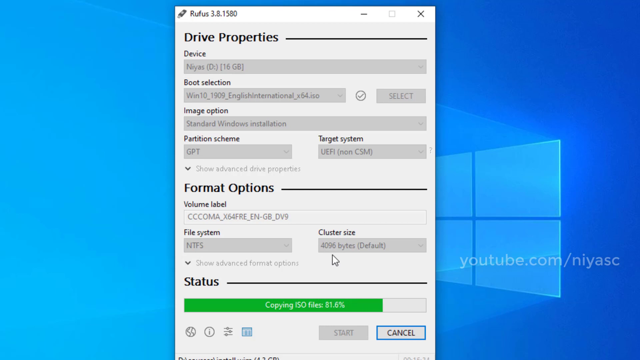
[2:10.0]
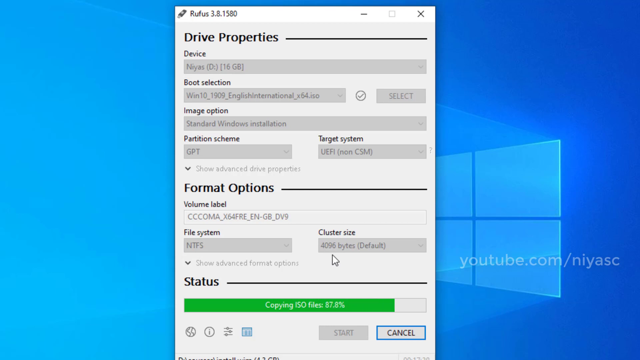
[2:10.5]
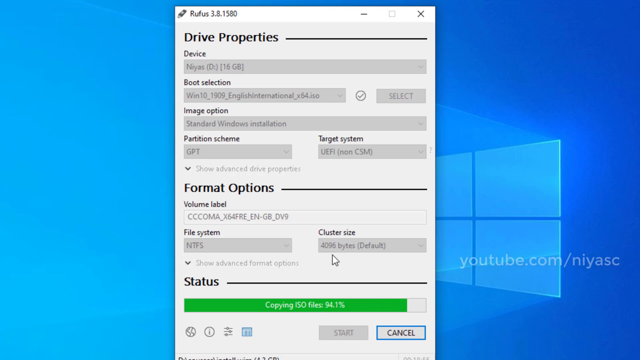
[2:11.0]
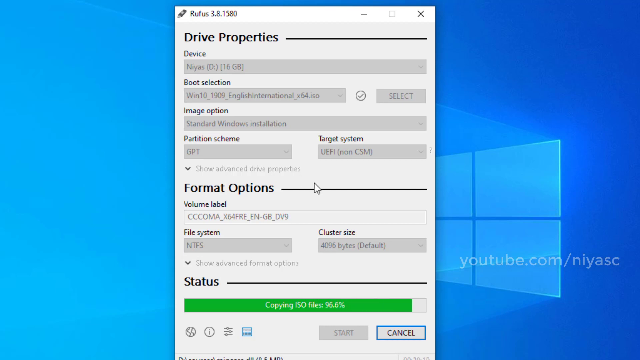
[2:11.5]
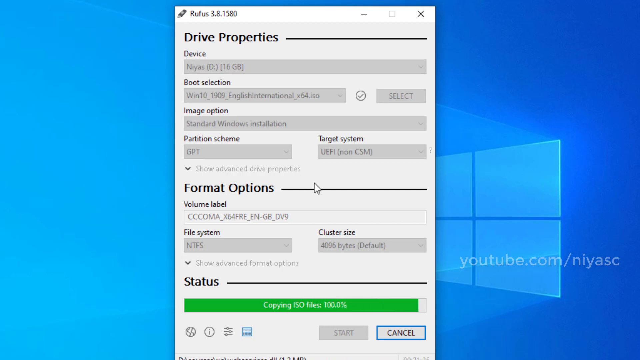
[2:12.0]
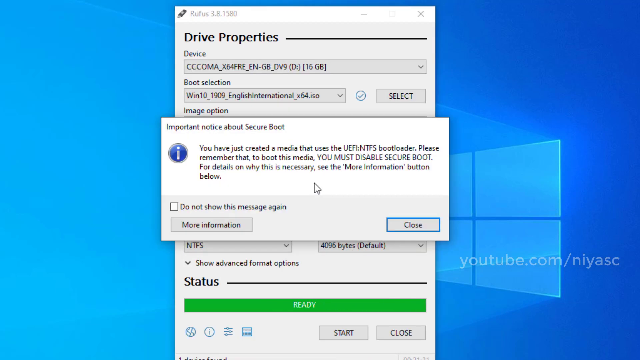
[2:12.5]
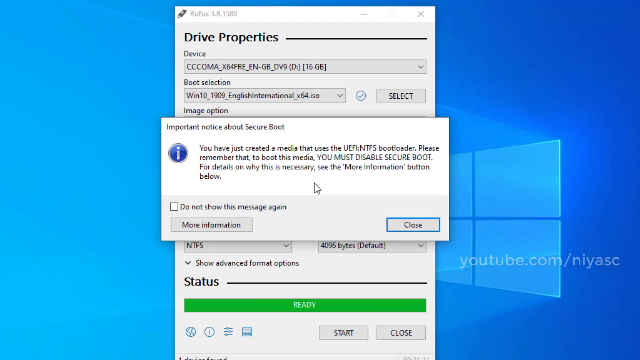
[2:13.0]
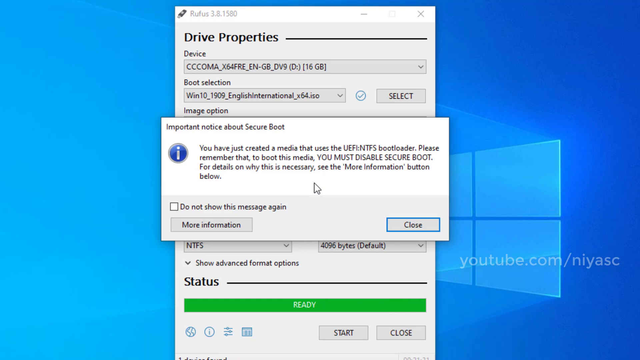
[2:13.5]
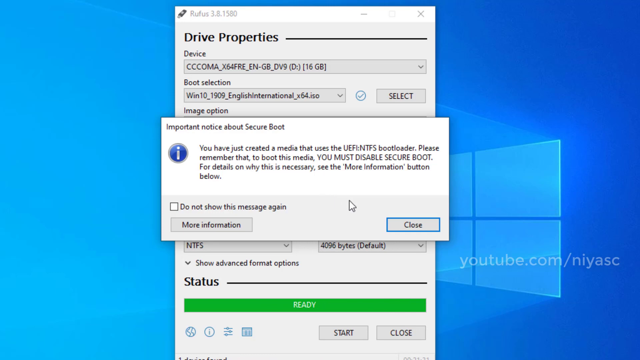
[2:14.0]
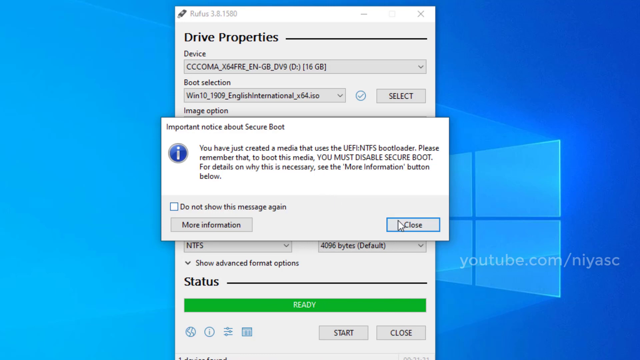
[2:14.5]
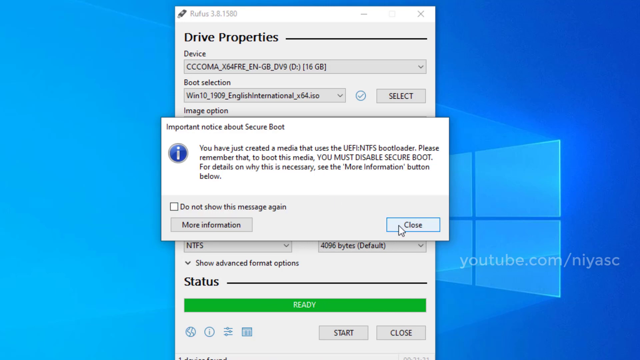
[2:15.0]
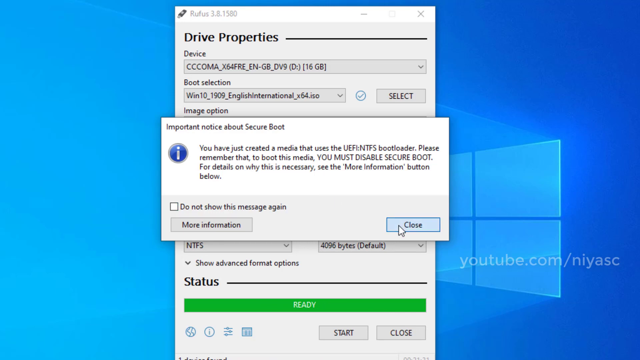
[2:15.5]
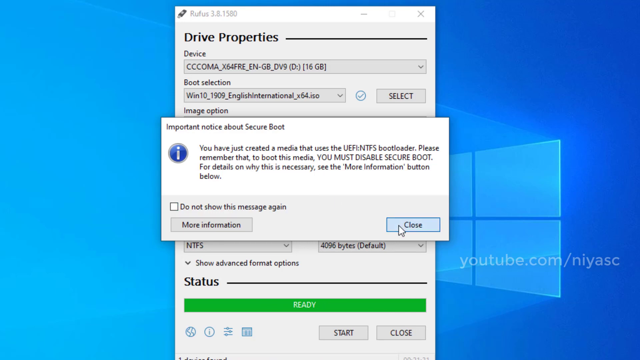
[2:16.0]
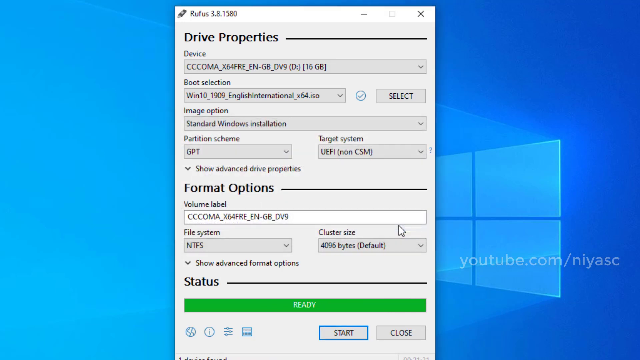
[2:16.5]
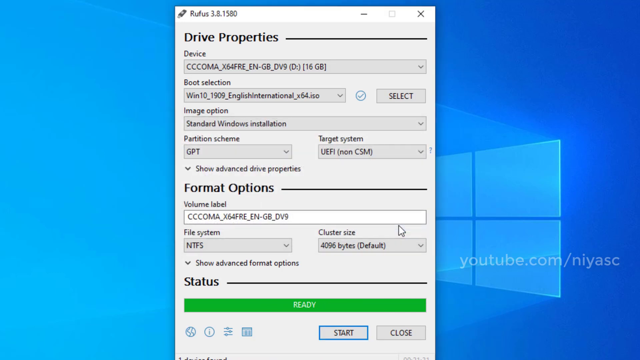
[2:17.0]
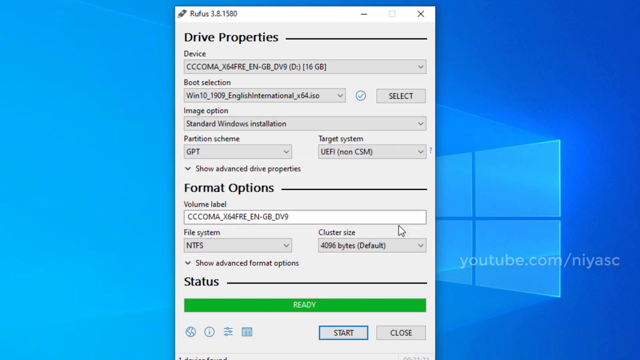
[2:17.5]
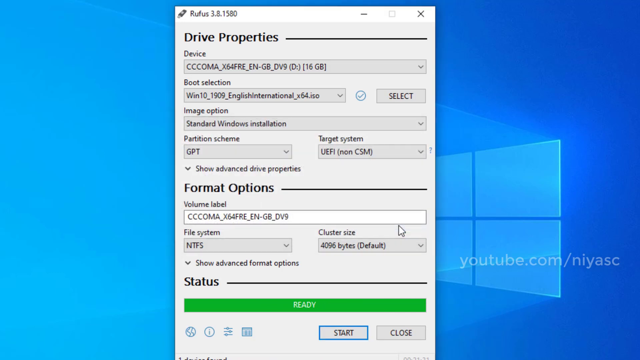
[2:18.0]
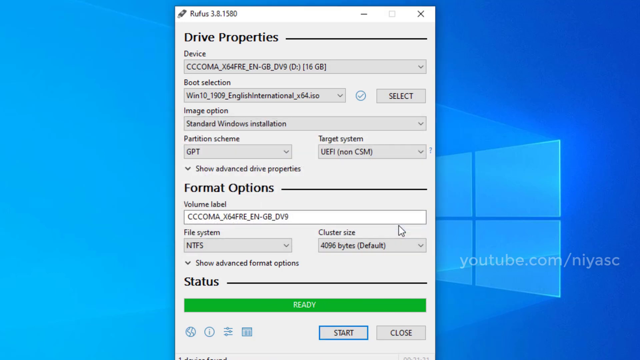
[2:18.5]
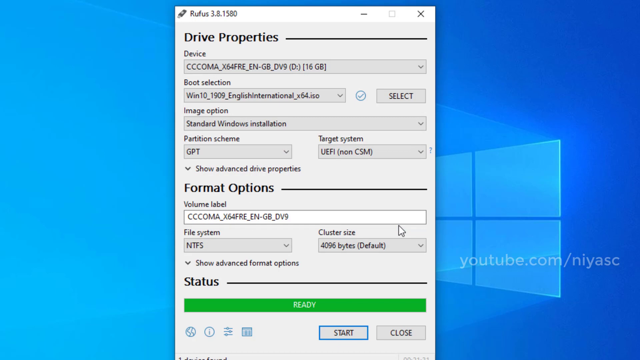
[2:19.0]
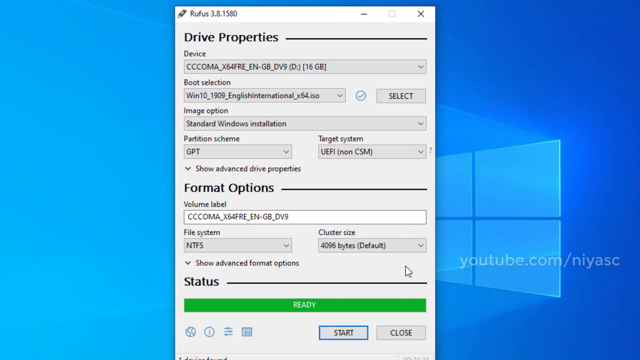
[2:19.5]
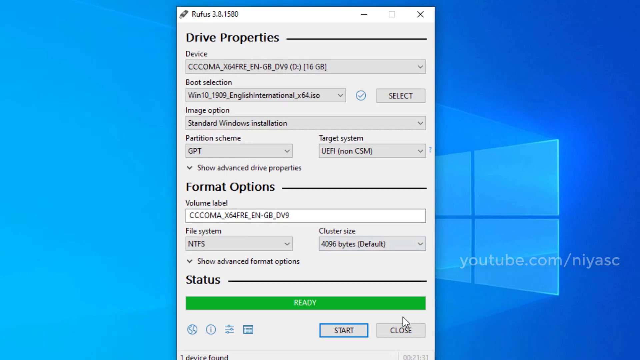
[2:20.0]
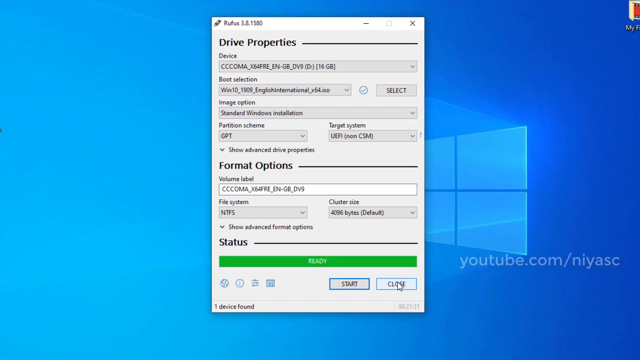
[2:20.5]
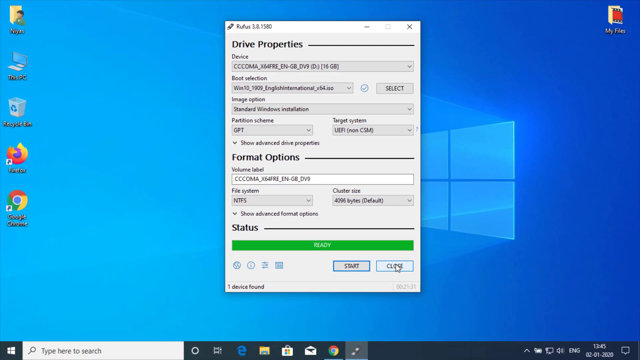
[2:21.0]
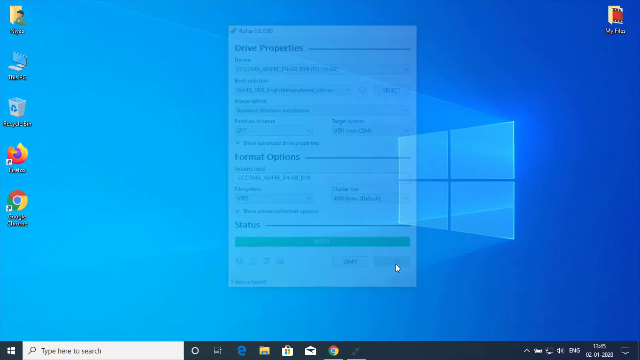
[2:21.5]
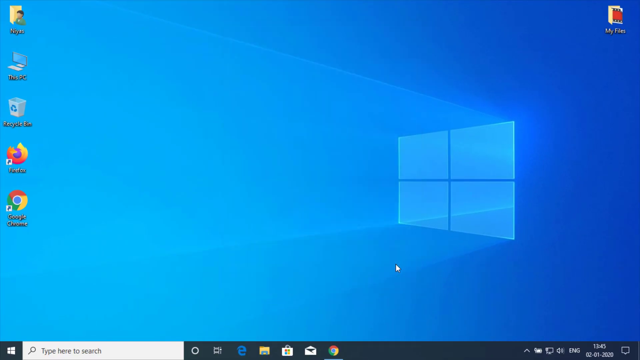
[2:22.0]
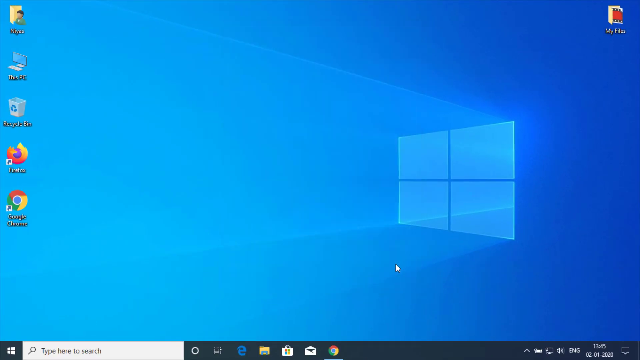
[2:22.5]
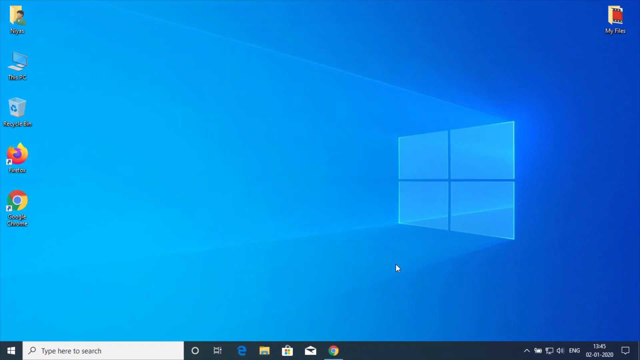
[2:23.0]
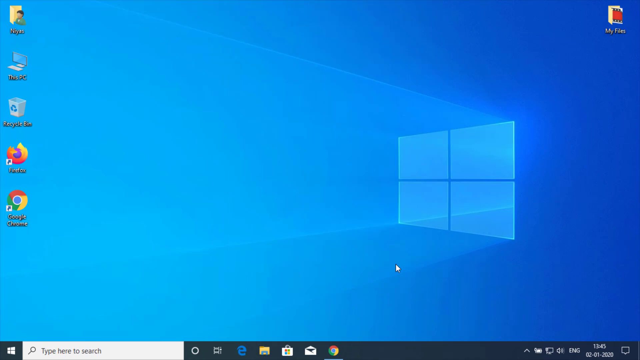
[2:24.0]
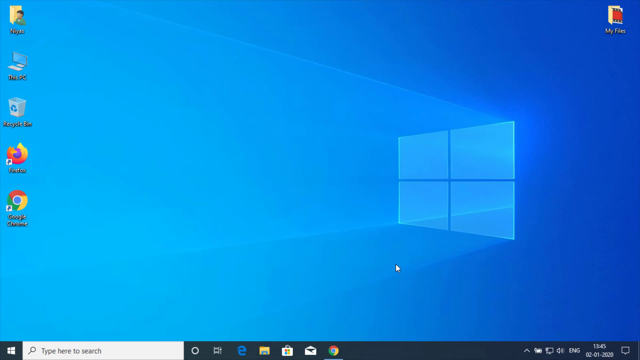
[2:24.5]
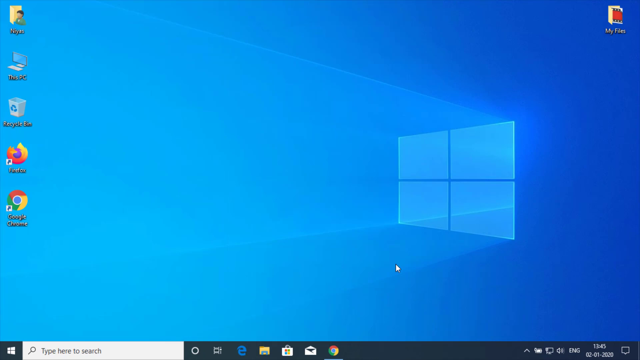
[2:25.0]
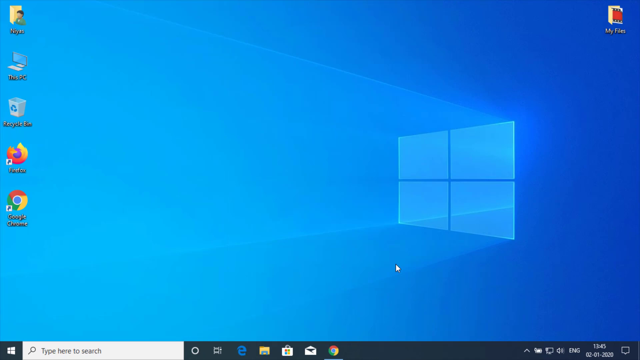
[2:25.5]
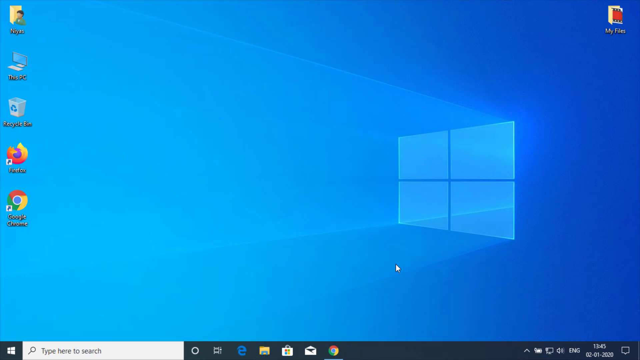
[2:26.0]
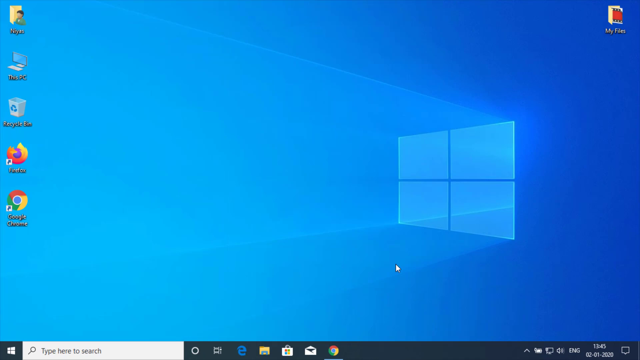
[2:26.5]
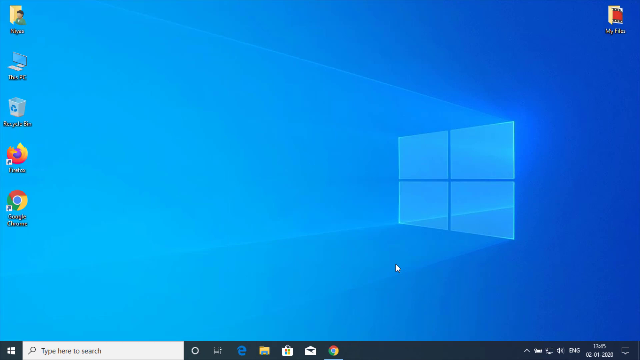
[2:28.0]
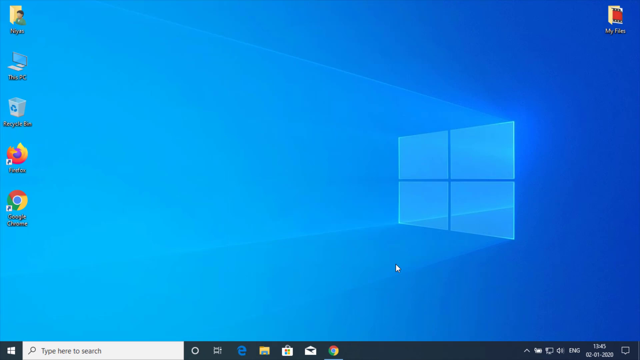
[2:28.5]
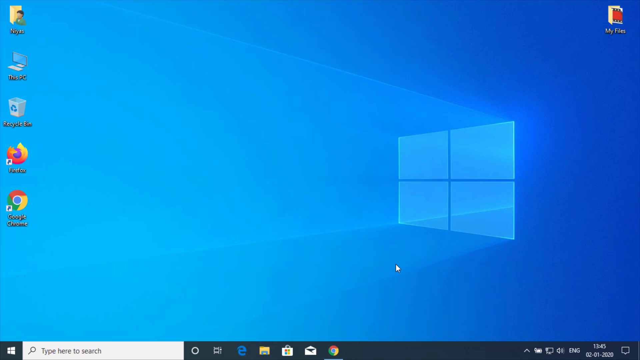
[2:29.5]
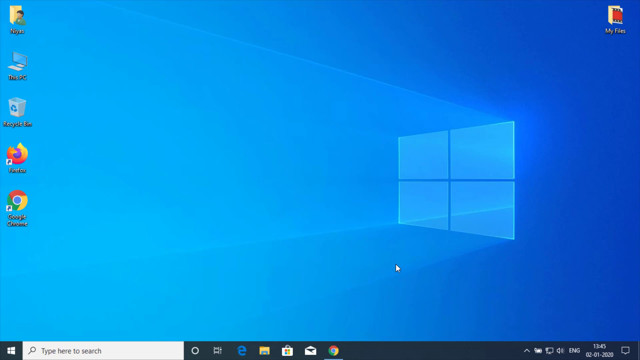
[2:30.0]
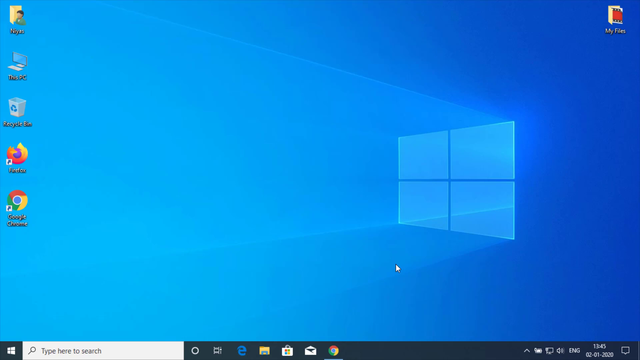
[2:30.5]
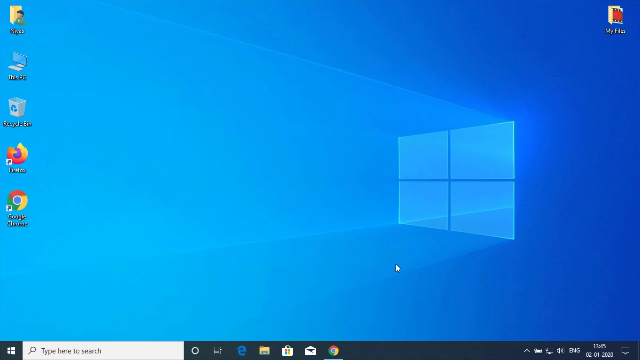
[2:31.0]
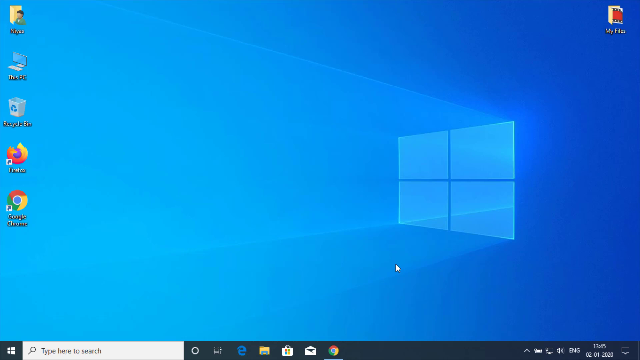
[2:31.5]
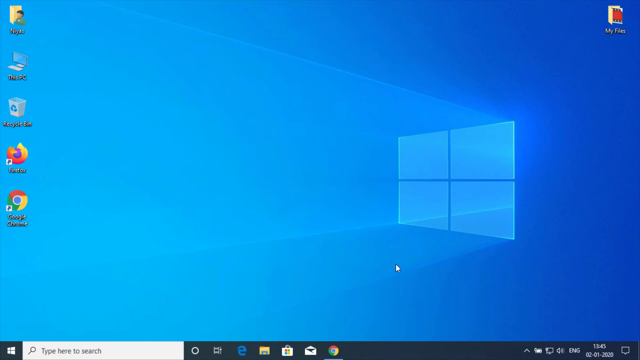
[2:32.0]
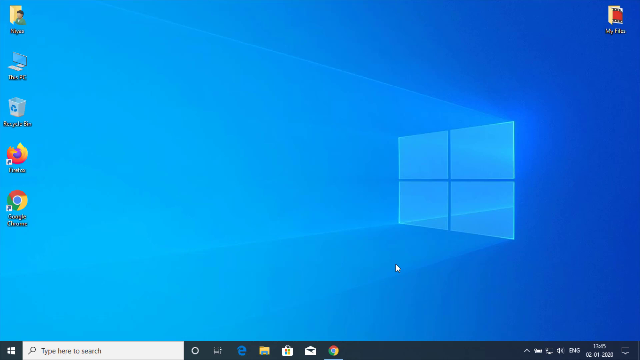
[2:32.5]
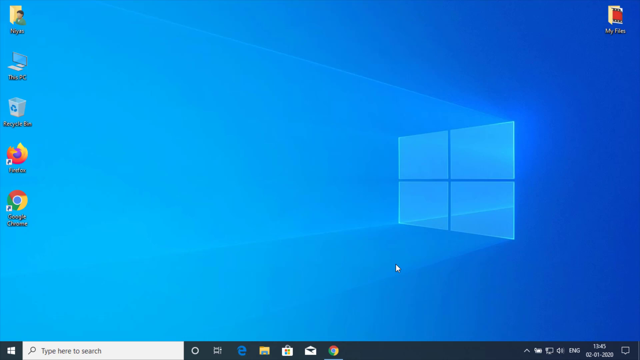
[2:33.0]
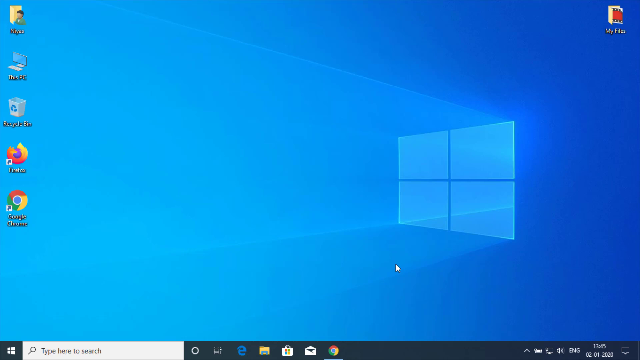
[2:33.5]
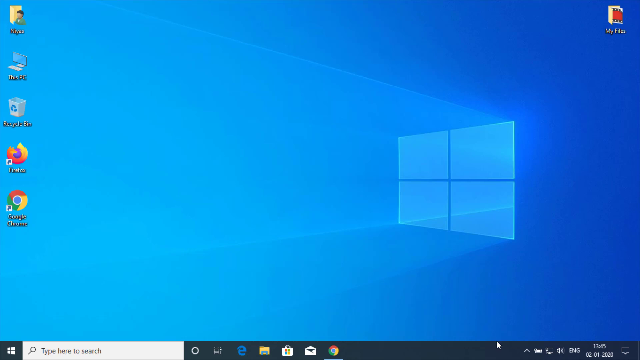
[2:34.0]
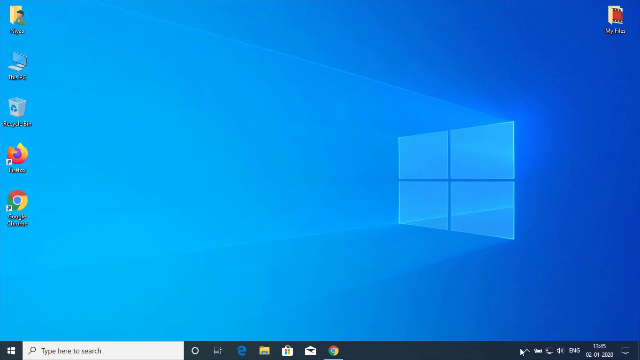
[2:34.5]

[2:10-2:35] The status bar continues to load until it reads "ready" and is a green bar from side to side. A new pop-up appears titled "important notice about secure boot", with text including "Please remember that to boot this media you must disable secure boot. For details on why this is necessary, see the more information button below". There is a checkbox reading "do not show this message again", the more information button below that, and a close button on the right-hand side. The user clicks the close button, then clicks the close button again, and the Rufus window disappears, leaving the Windows home computer screen from earlier.